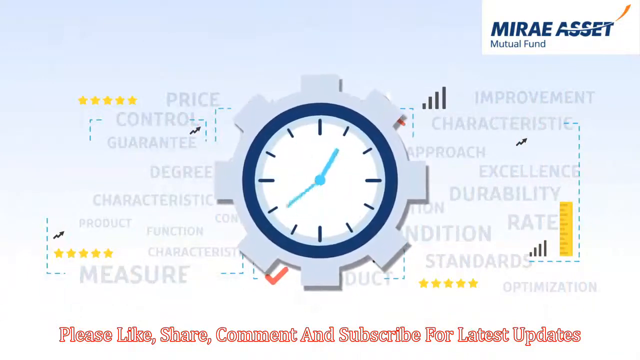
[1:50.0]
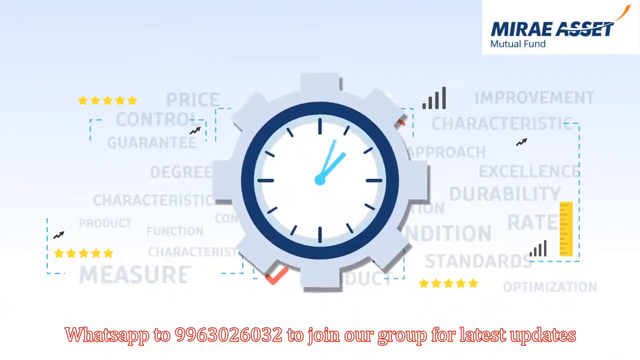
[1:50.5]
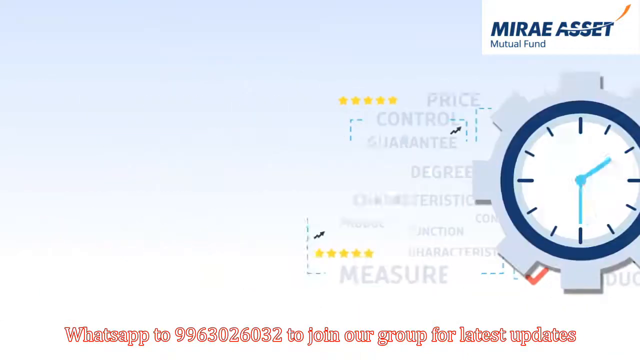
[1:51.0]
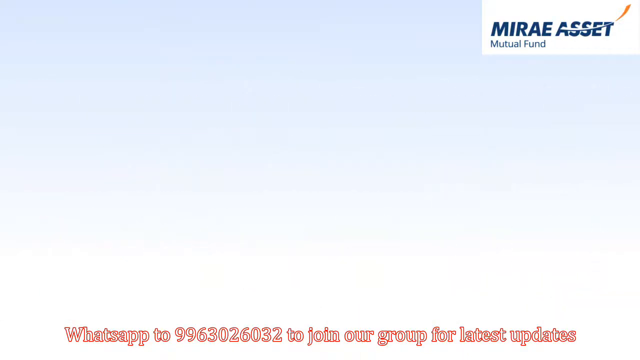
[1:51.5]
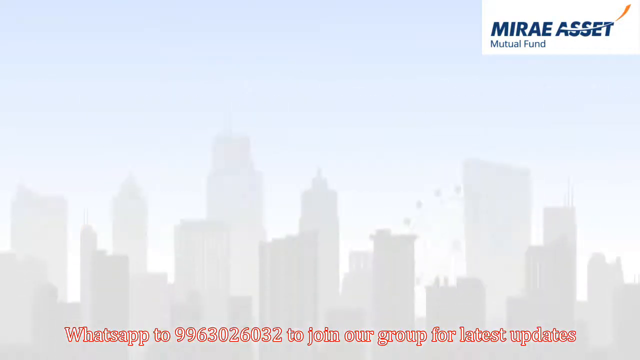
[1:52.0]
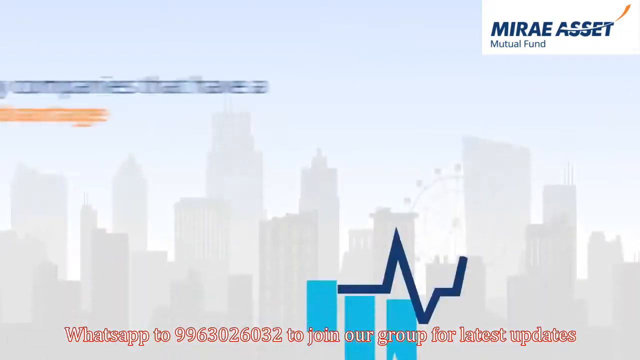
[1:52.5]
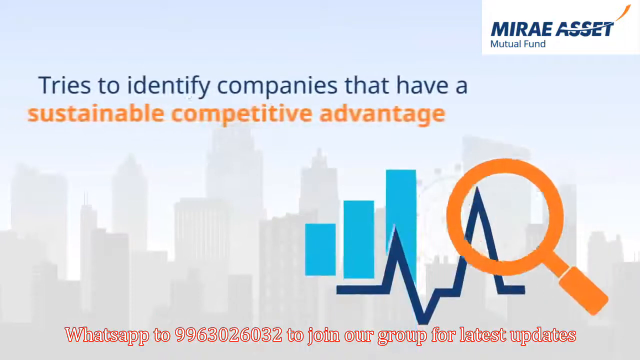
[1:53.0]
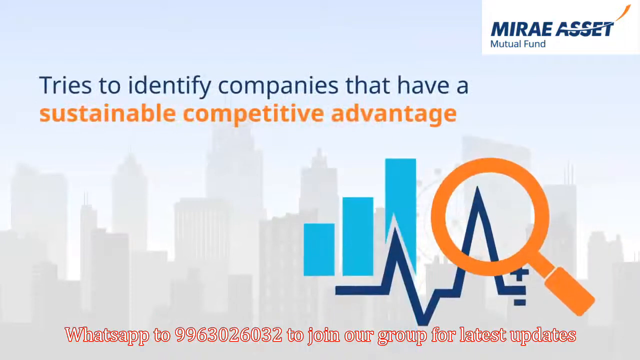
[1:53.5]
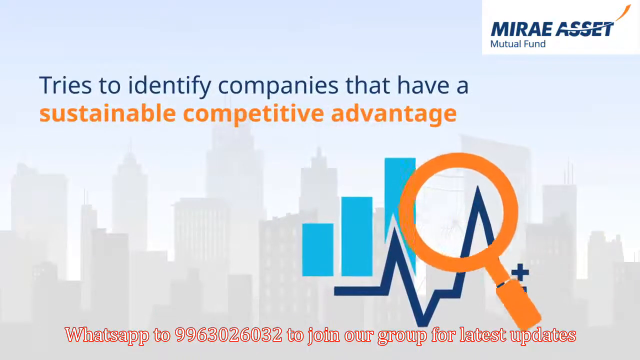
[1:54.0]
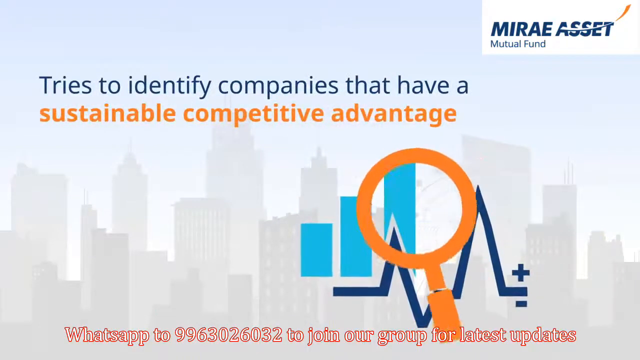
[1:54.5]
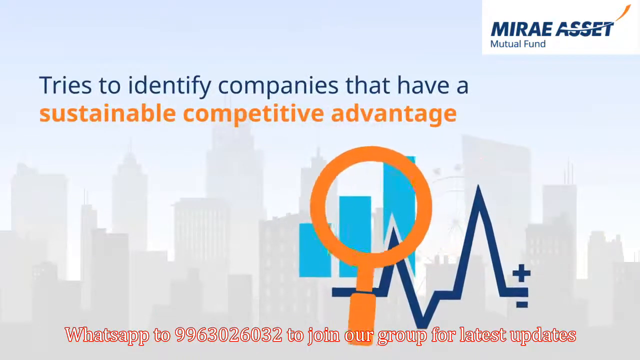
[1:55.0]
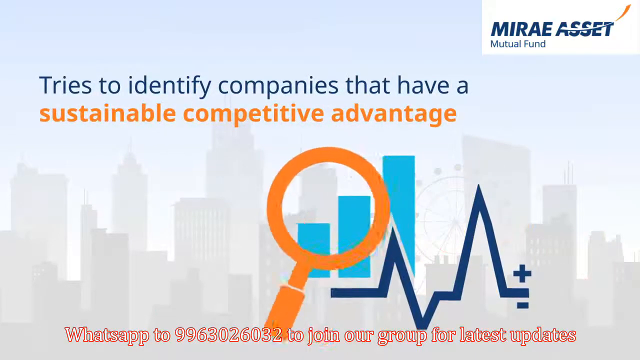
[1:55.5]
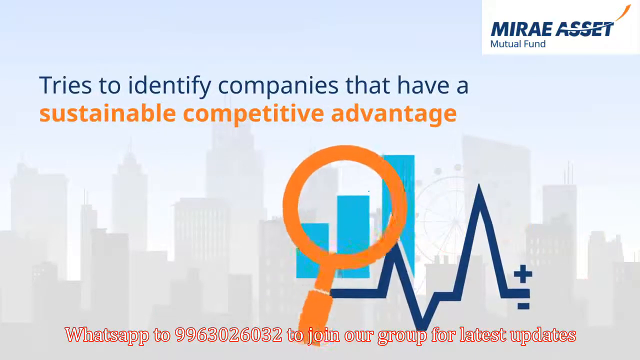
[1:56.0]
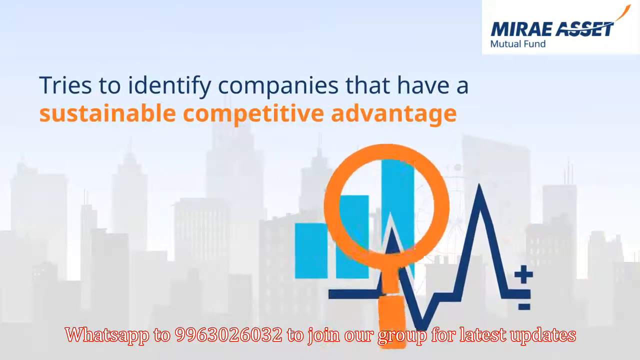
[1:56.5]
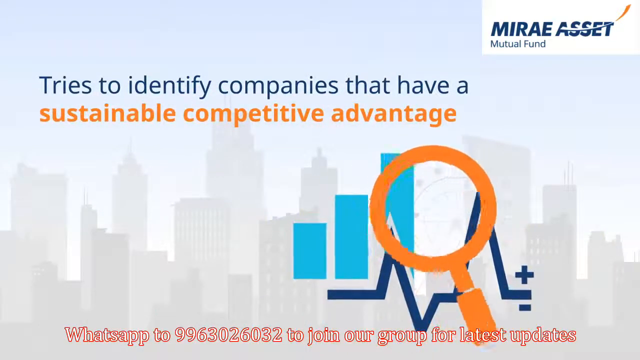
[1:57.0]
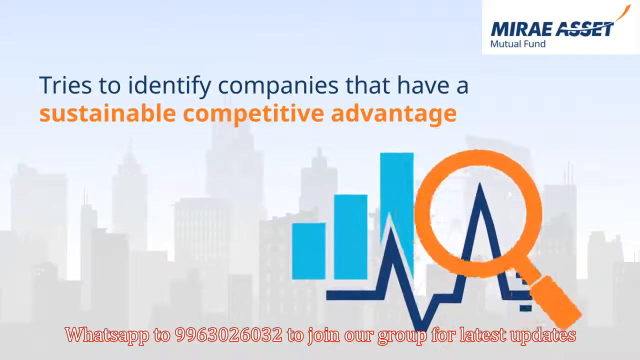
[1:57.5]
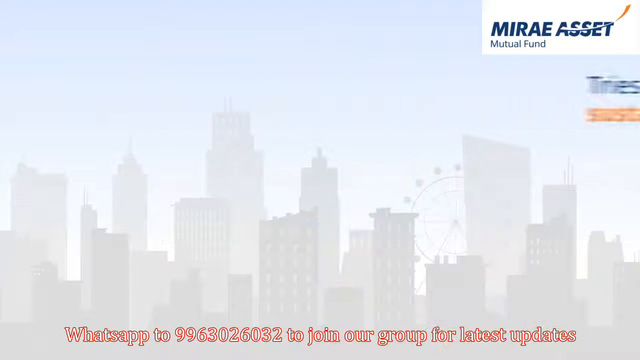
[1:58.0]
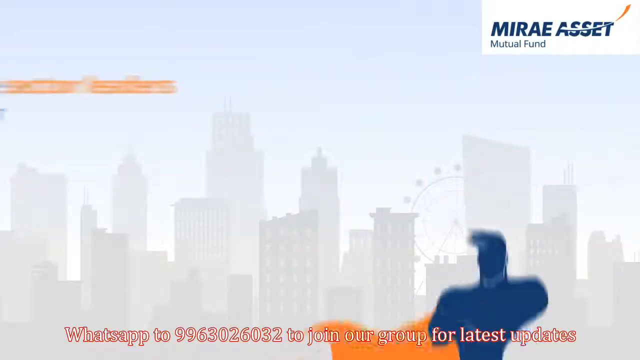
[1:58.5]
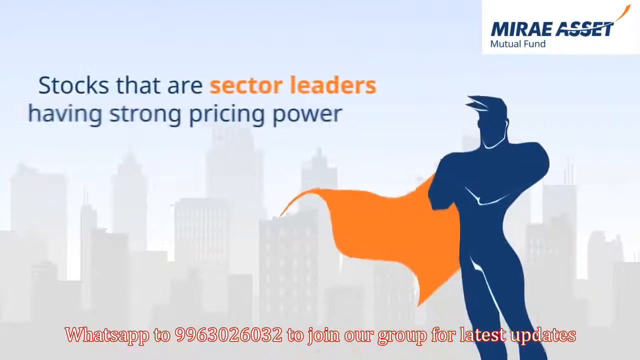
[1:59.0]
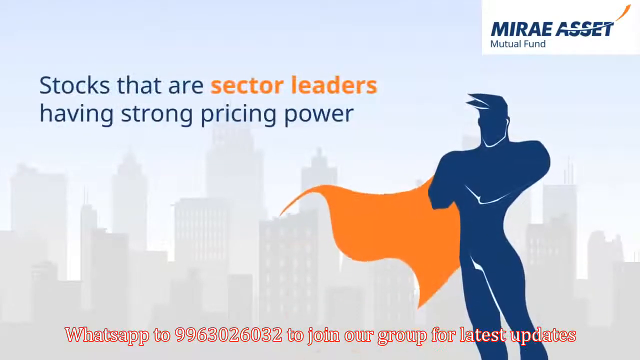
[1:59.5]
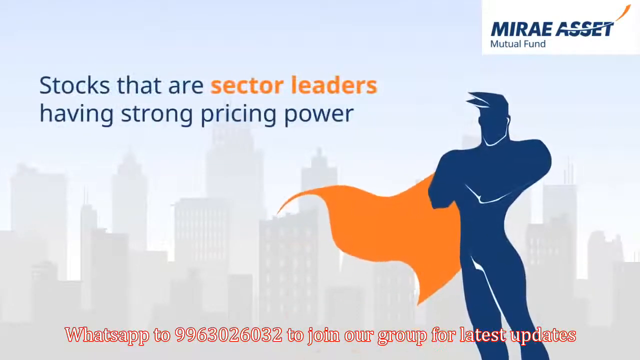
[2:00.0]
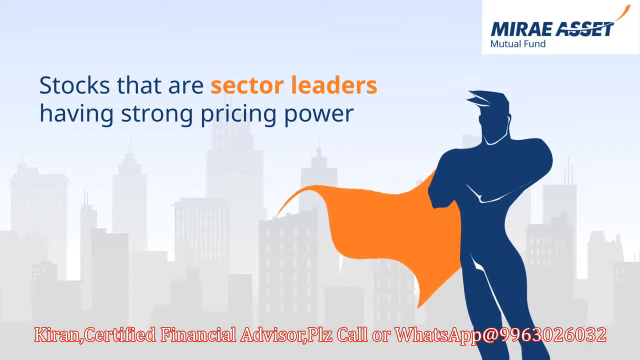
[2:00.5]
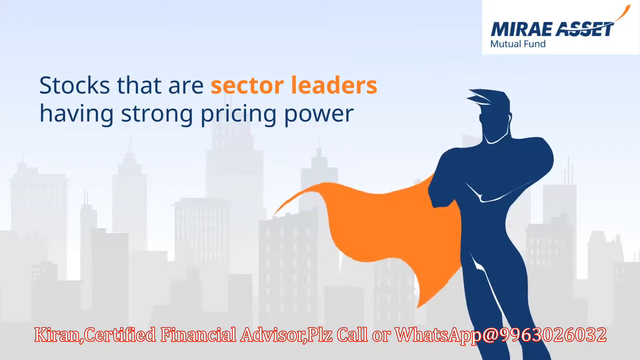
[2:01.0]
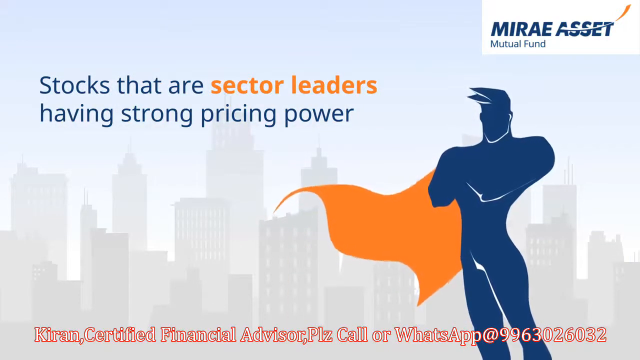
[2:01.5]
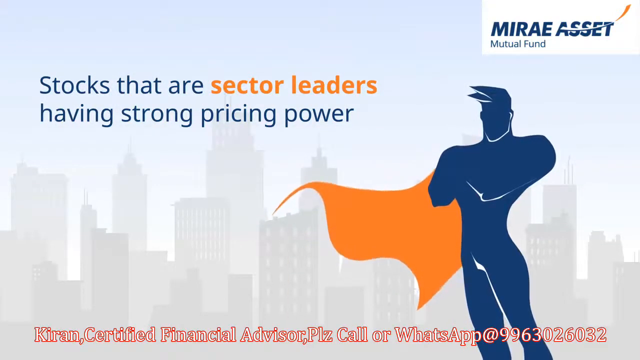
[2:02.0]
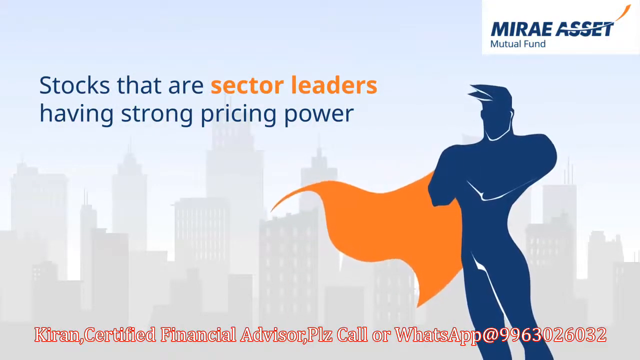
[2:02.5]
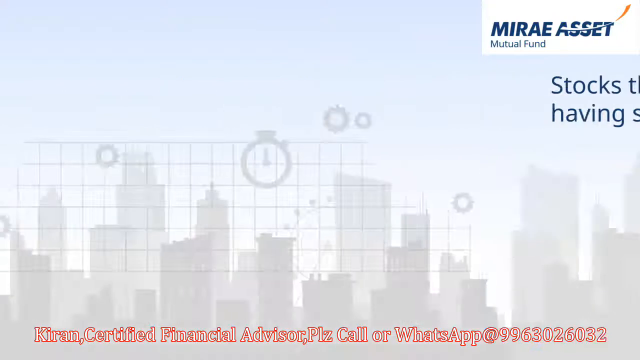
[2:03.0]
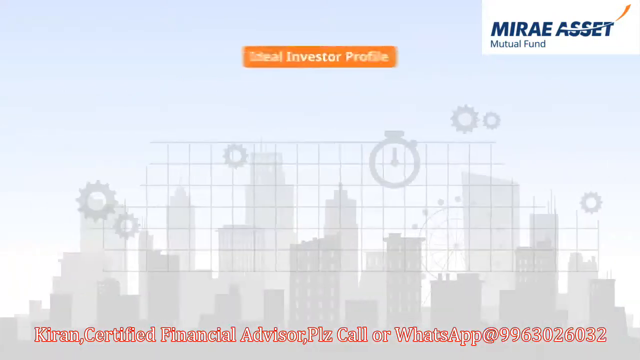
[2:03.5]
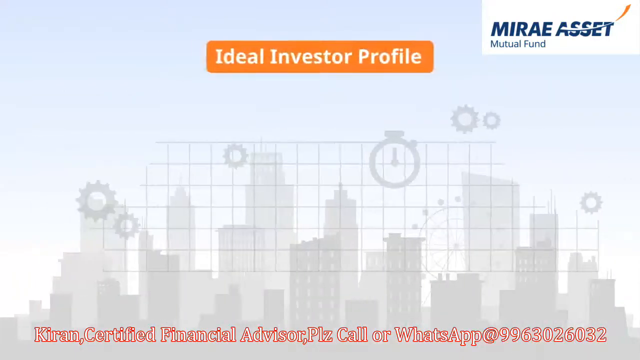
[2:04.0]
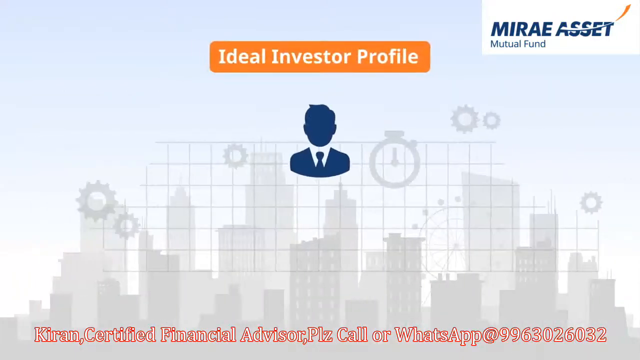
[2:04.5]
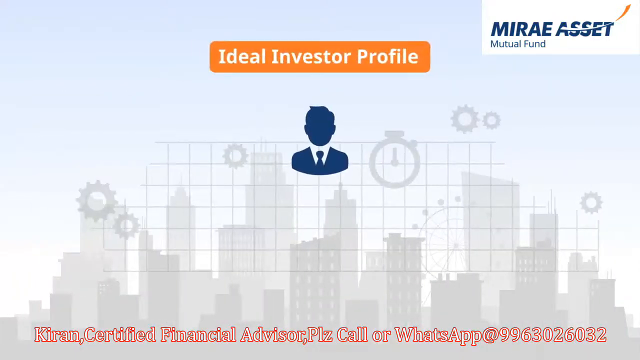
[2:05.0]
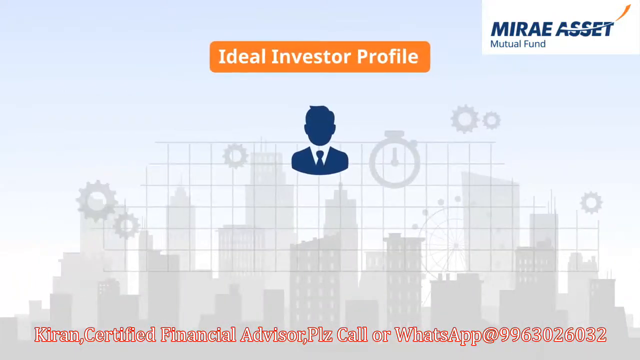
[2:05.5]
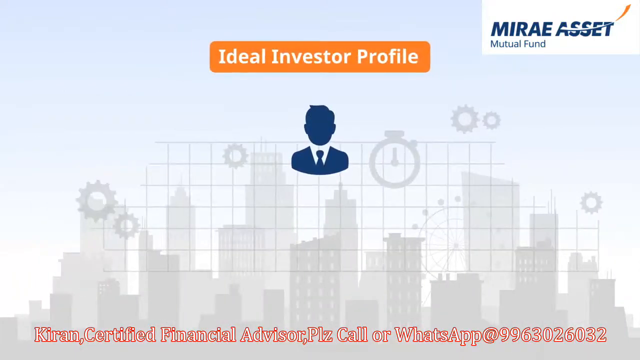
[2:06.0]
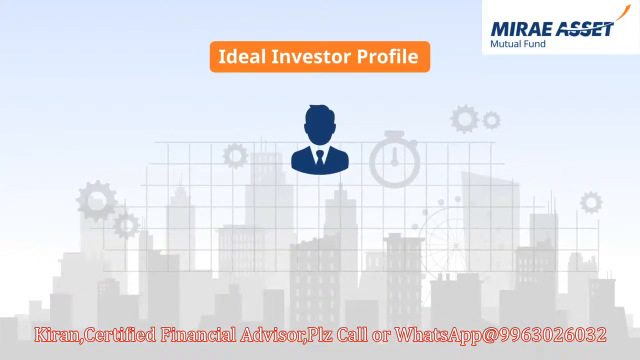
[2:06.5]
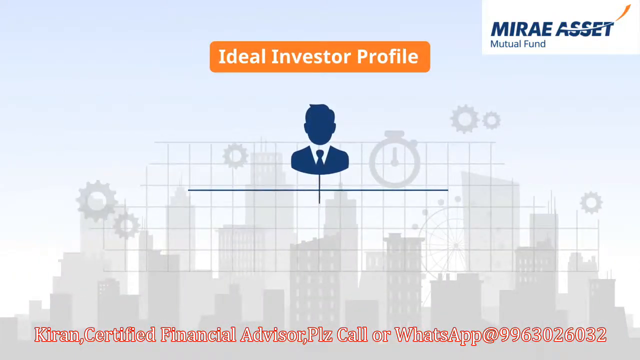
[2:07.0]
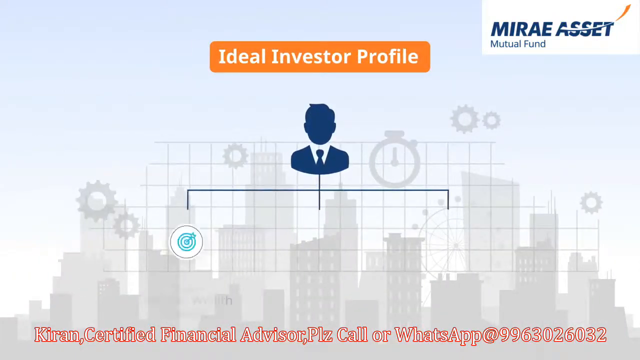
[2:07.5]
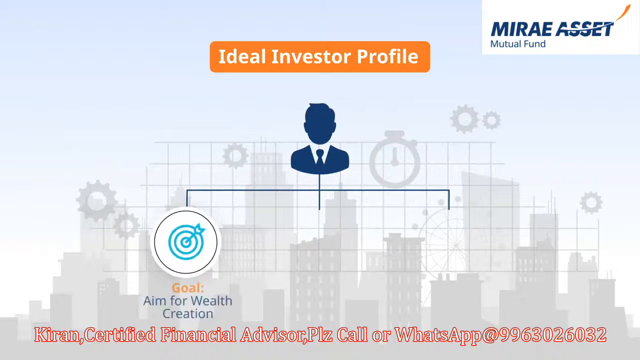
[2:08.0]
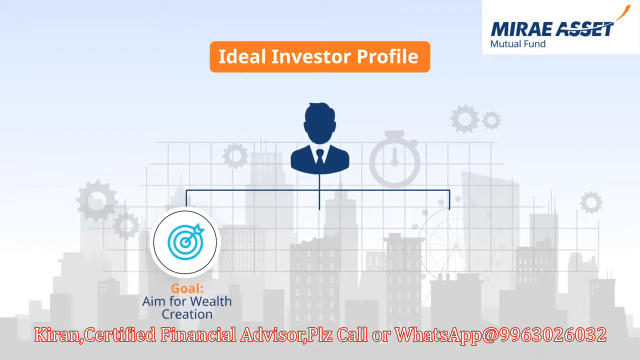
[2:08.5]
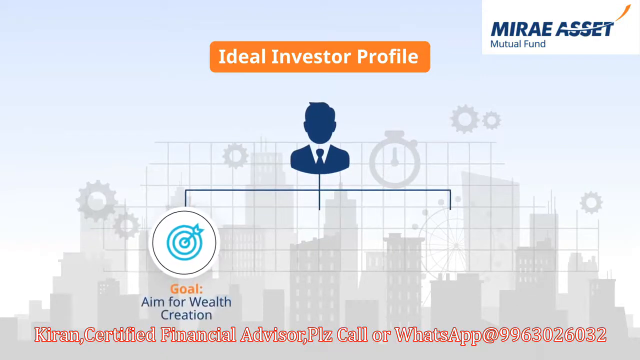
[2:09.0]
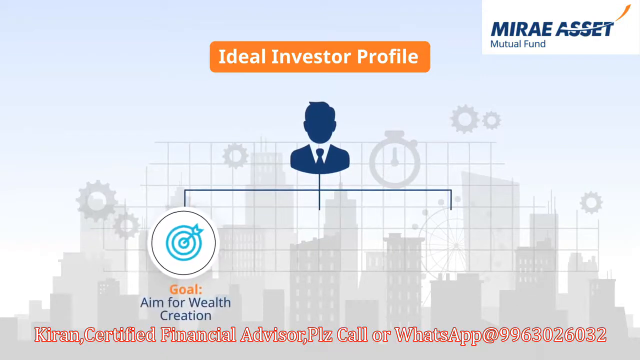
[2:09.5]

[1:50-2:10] A clock is on the screen with small gray words behind it, including "price", "control", "guarantee", "degree", "characteristics", "improvement", "durability", "excellence", "standard rate" and "measure", and a small ruler is at the far bottom right. The clock shows approximately 1:41, although the small hand is not much past the one. The clock's hand starts moving around, and a new screen reads "tries to identify companies that have a sustainable competitive advantage". It shows an orange magnifying glass over a chart with three blue bars getting higher and higher, then what seems to be a dark blue line with peaks and a dip, and a plus sign, over a very faint gray cityscape. The next screen reads "stocks that are sector leaders have strong pricing power" and shows what appears to be a larger-than-life superhero man as a blue silhouette with an orange cape flapping a little in the wind, against the cityscape background. The next screen shows the same cityscape with clocks and cogs in gray behind it and a lined grid, with a faceless blue silhouette of a man in a suit in the center. An orange banner with white lettering reading "ideal investor profile" is at the very top in the center. A line extends from the man to a white circular icon with a blue bullseye, then another line to what appears to be a calendar in a small white icon, and a third line appears. The animation moves fairly fast.